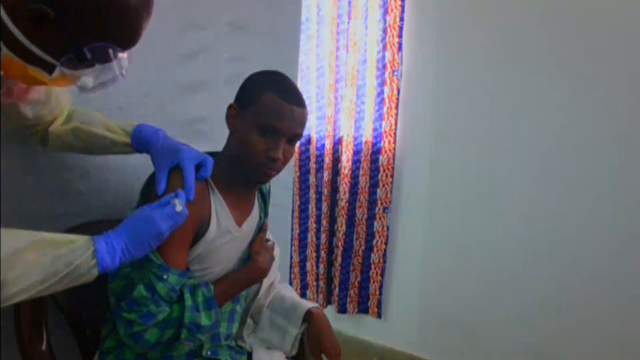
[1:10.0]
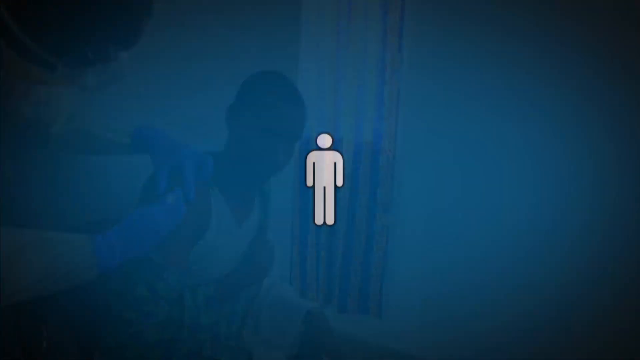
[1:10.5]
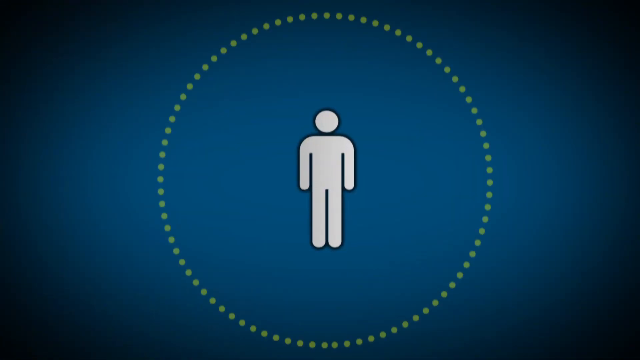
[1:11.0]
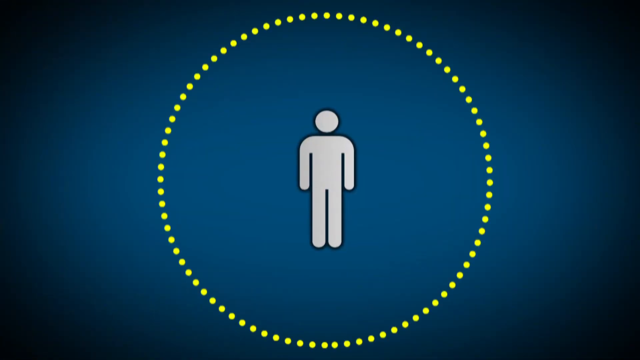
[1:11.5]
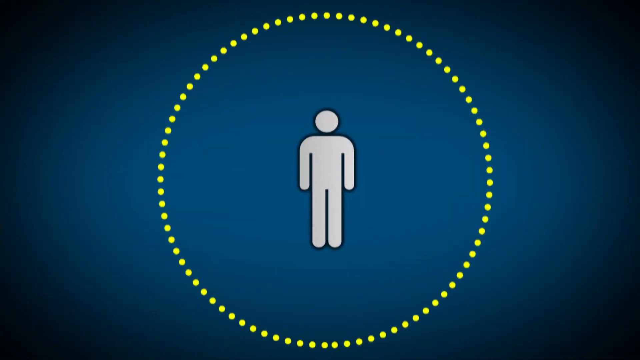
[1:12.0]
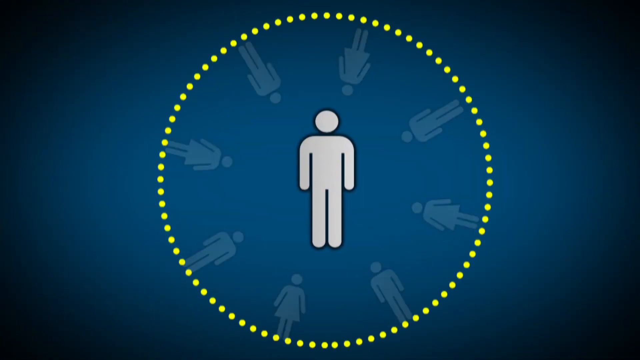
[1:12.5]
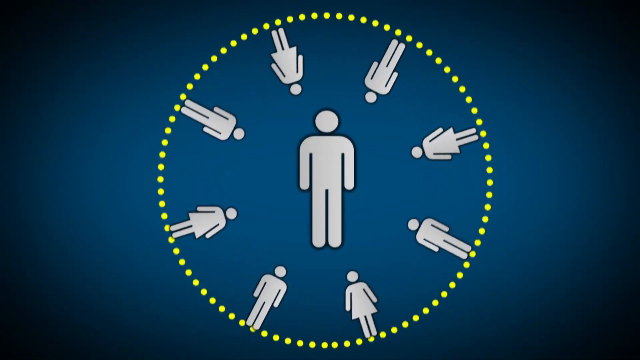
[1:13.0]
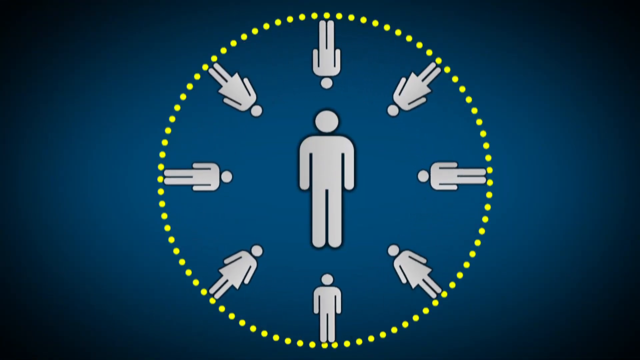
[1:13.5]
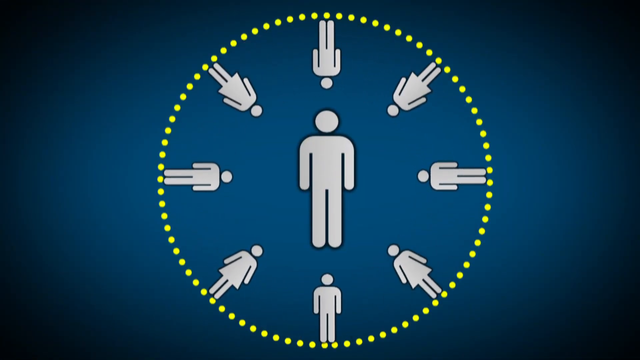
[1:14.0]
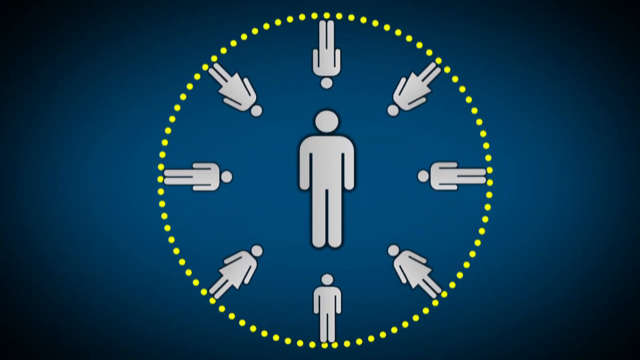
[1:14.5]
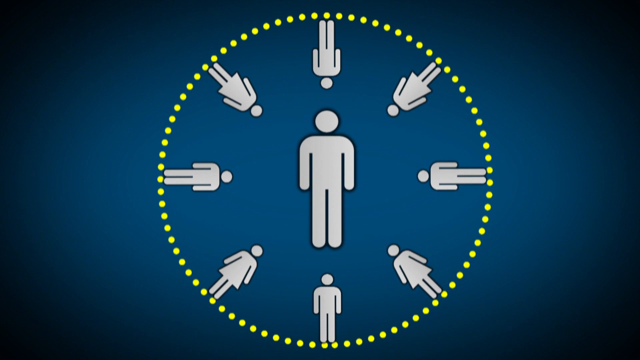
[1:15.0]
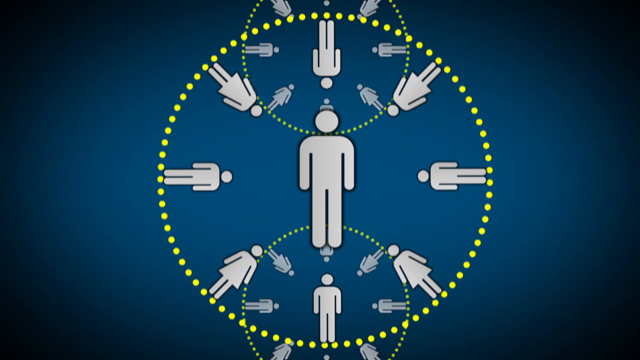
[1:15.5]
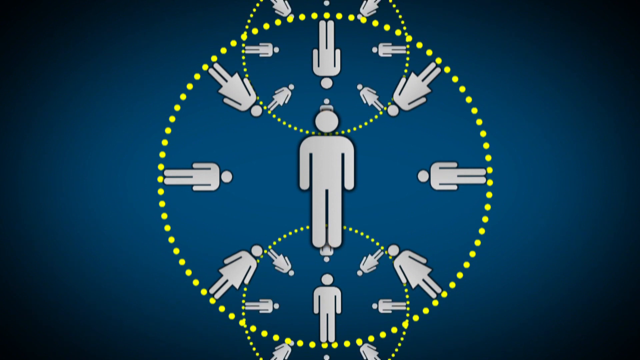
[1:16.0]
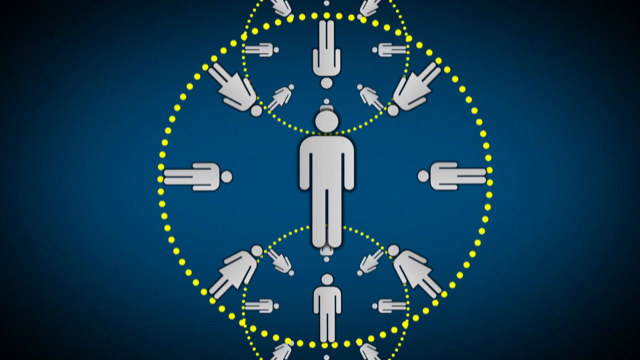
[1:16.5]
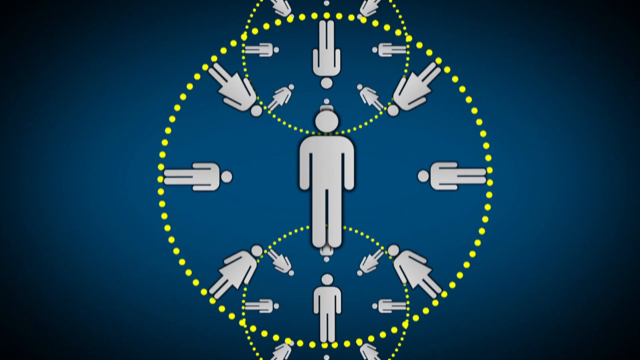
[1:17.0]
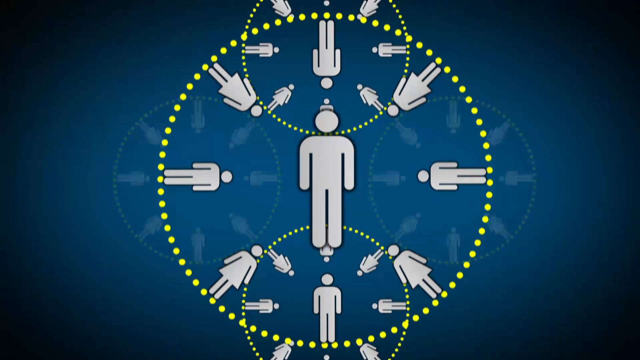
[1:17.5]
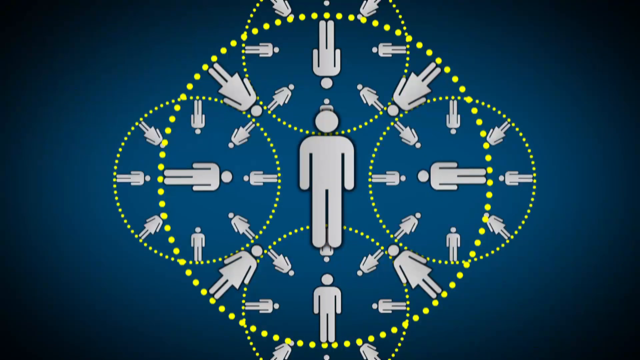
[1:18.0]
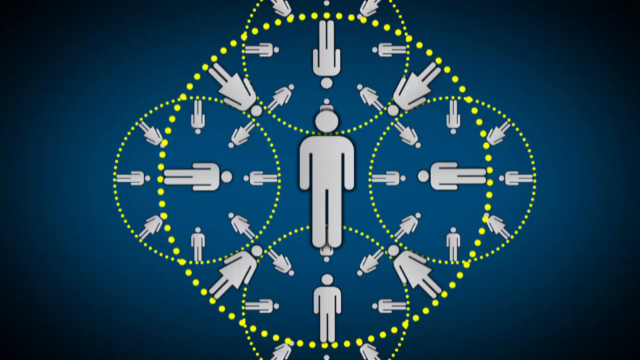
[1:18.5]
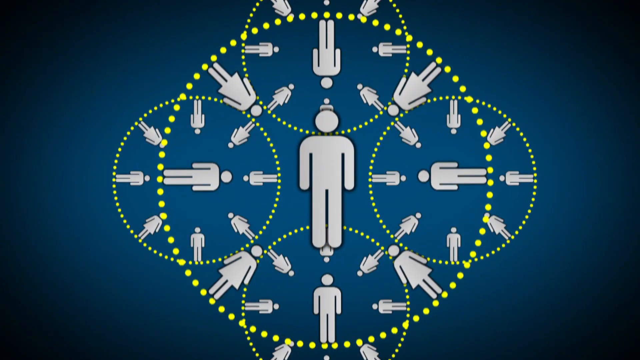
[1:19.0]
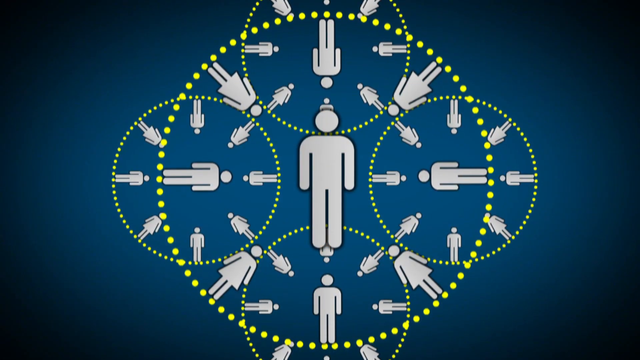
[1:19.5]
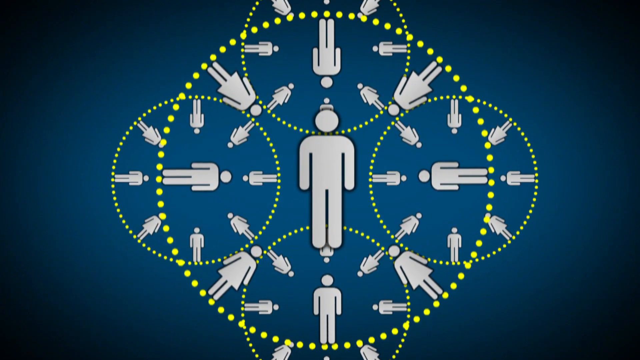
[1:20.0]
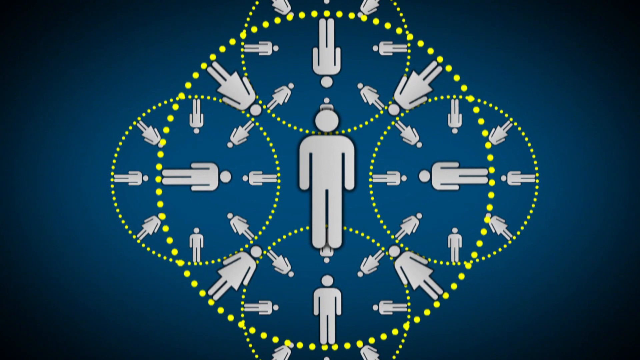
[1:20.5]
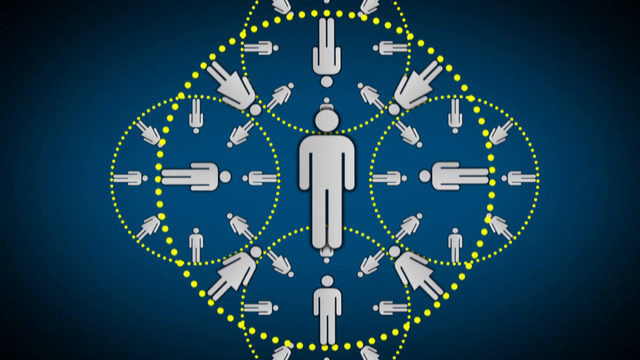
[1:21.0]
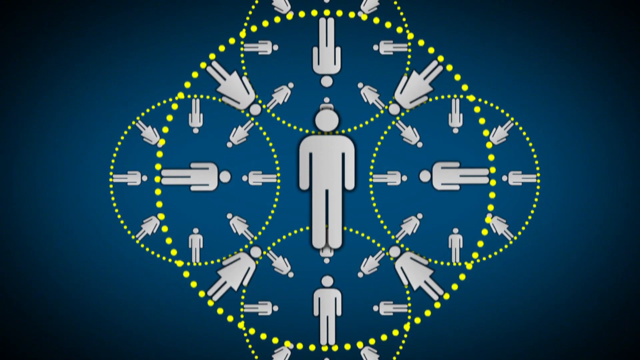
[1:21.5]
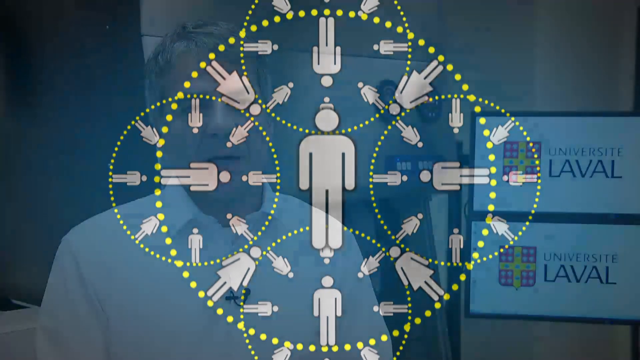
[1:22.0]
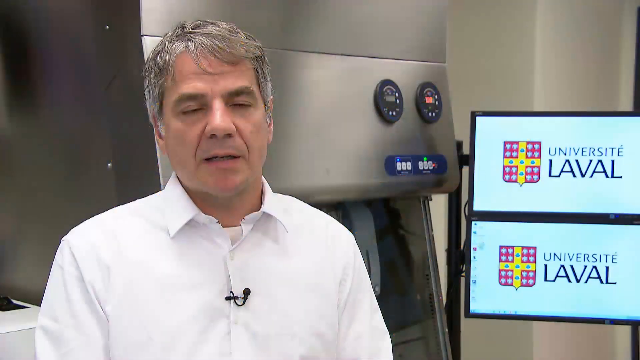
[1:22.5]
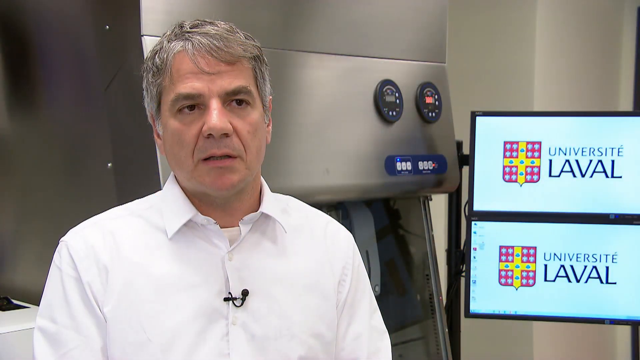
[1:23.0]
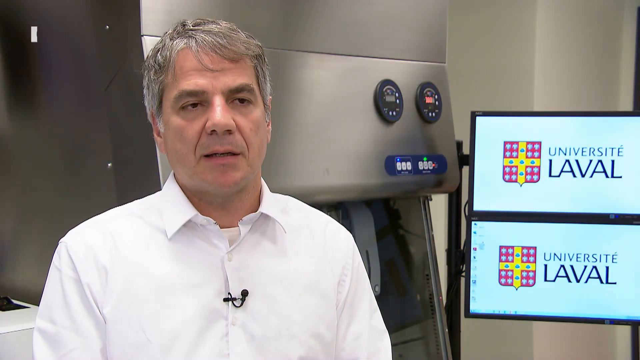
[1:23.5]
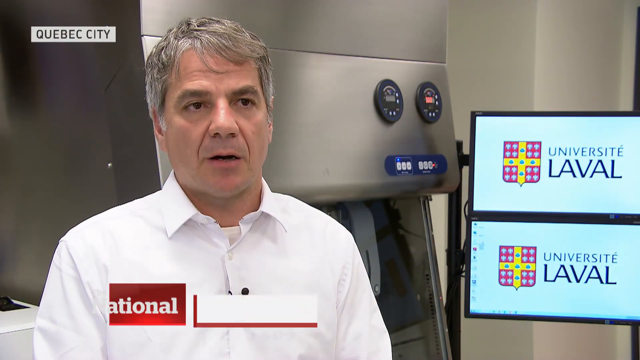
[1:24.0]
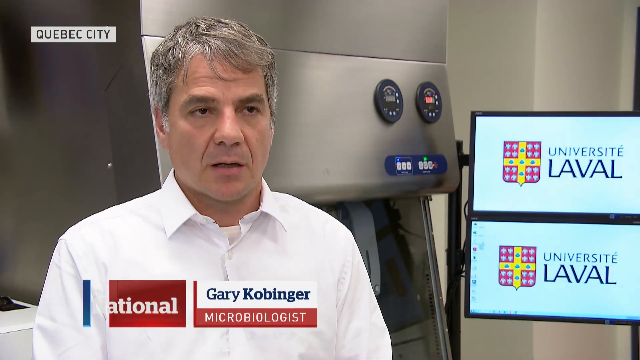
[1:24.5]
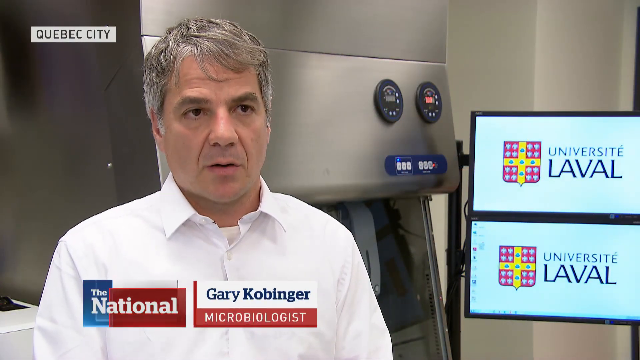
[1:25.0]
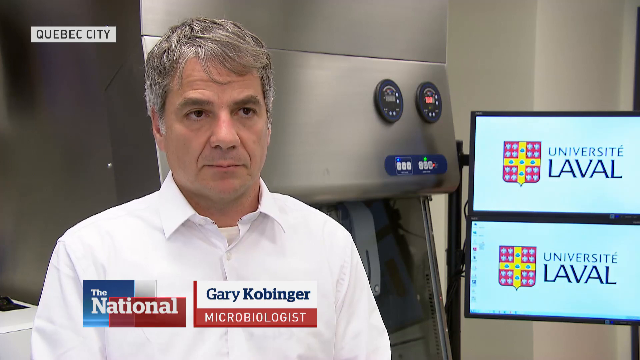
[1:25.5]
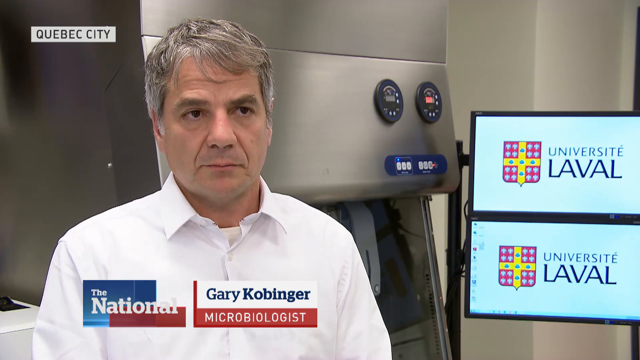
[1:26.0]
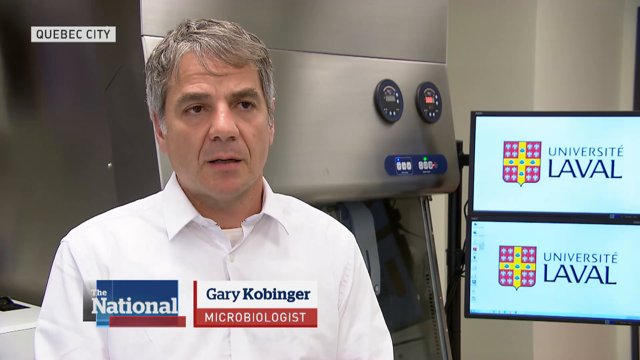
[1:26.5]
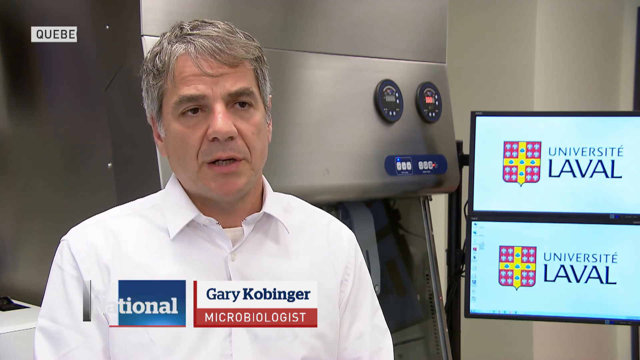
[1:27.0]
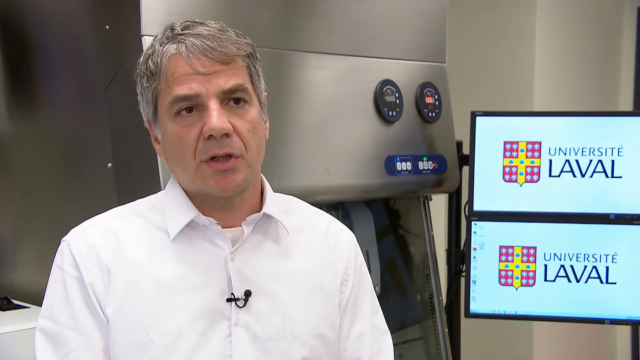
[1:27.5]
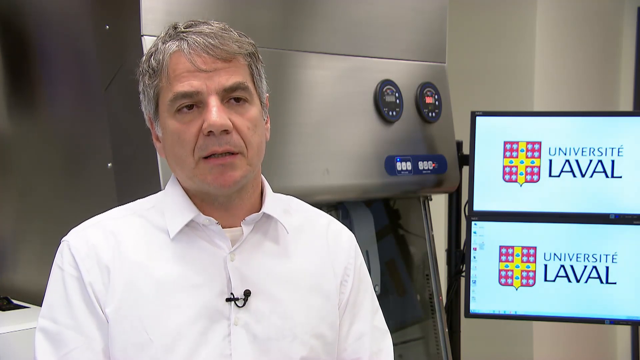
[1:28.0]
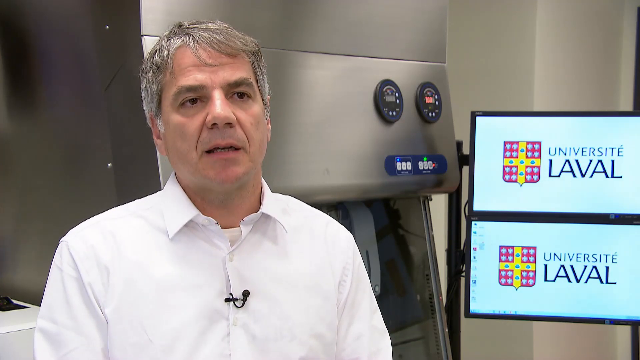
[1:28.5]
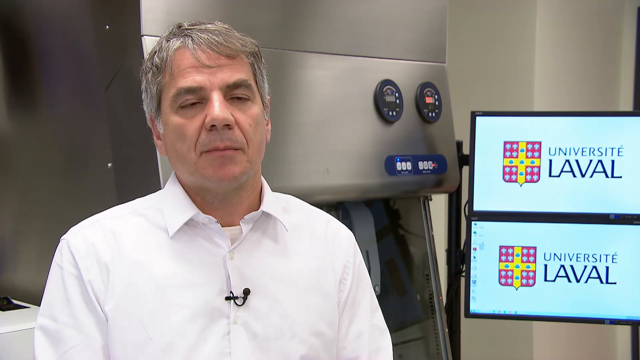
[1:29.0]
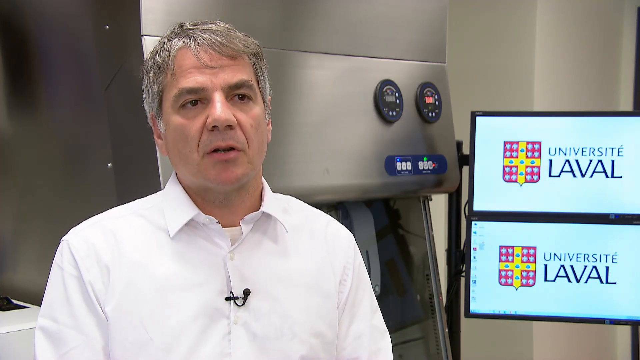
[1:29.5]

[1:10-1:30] Against a dark blue background, an image of a human body appears; it looks like a drawing and is very plain, with no features. Around it is a circle of small yellow dots. More figures drawn the same way come along and go around the circle surrounding the original figure, and additional figures and additional circles of yellow dots are added. The scene then changes to a man in a white collared shirt talking into the camera, with a microphone attached to his shirt. Behind him is some kind of large metal equipment, and two screens both say "Universite Laval," with some sort of flag beside them. At the bottom of the screen the text "The National" pops up, followed by "Gary Kobinger" and, below it, "Microbiologist."